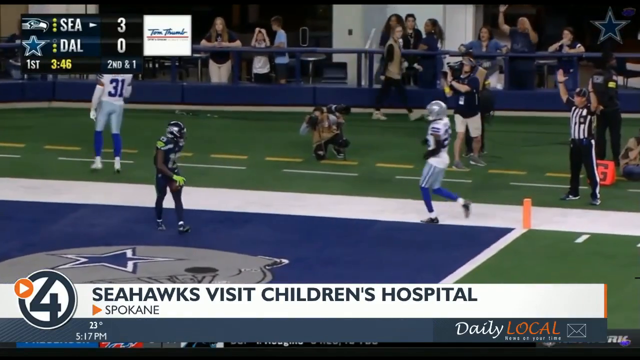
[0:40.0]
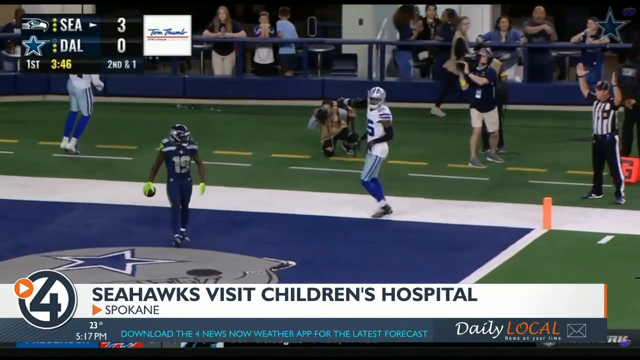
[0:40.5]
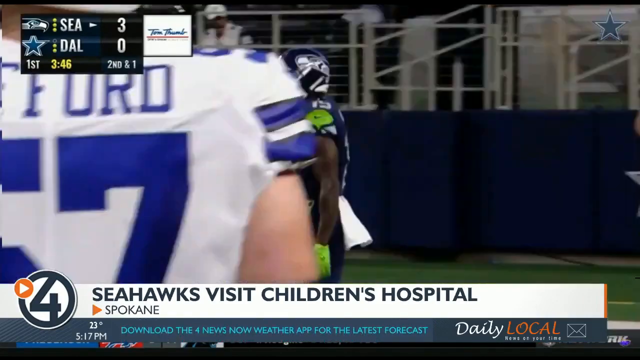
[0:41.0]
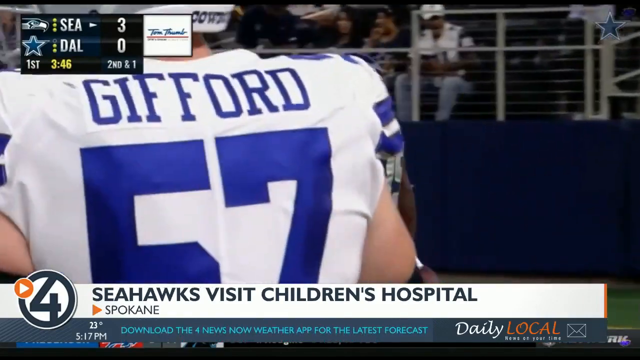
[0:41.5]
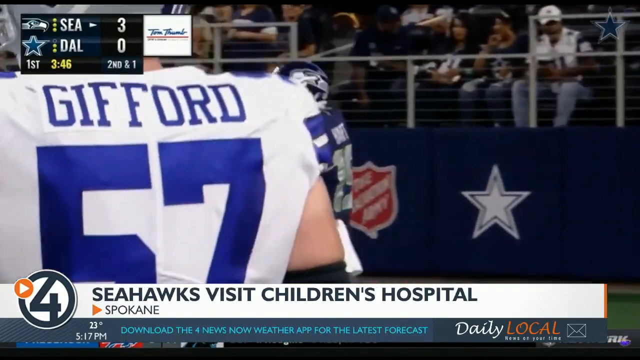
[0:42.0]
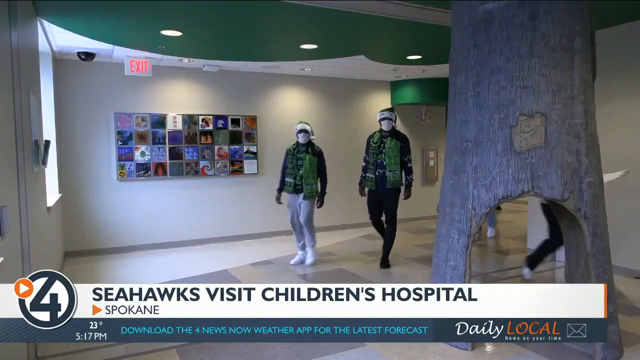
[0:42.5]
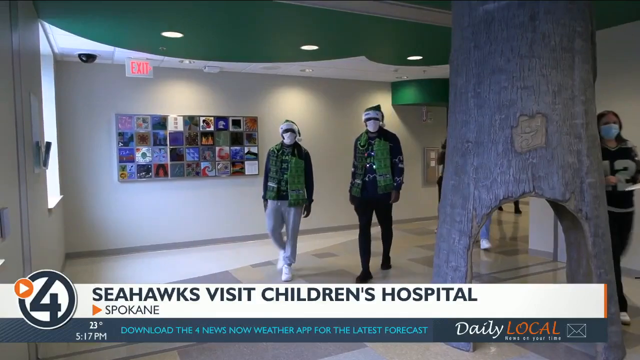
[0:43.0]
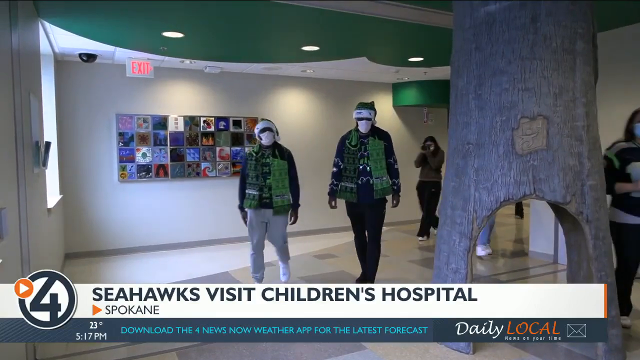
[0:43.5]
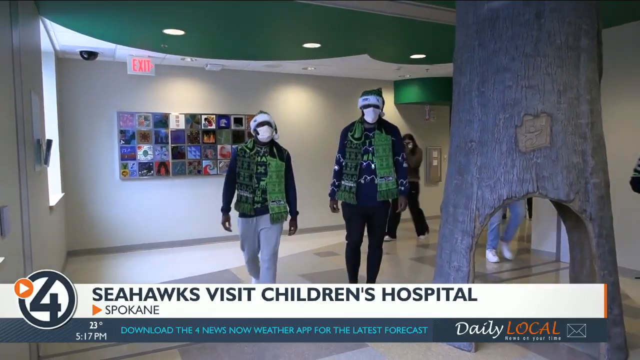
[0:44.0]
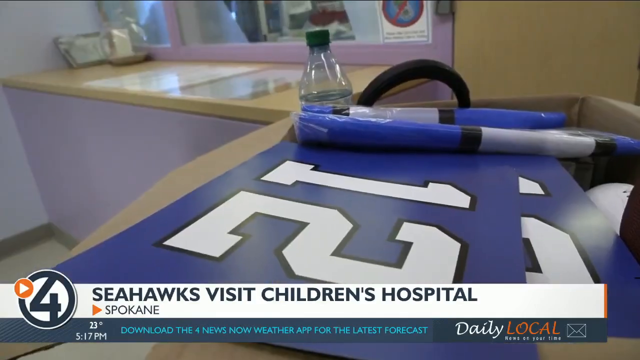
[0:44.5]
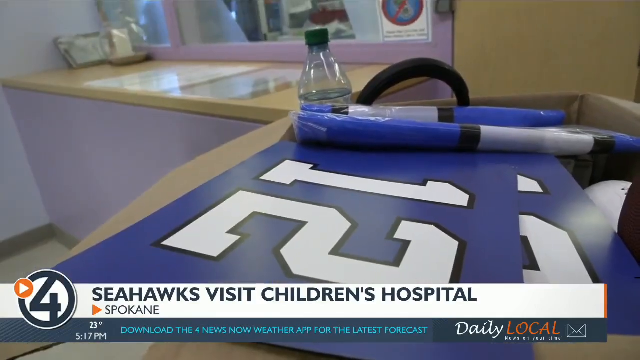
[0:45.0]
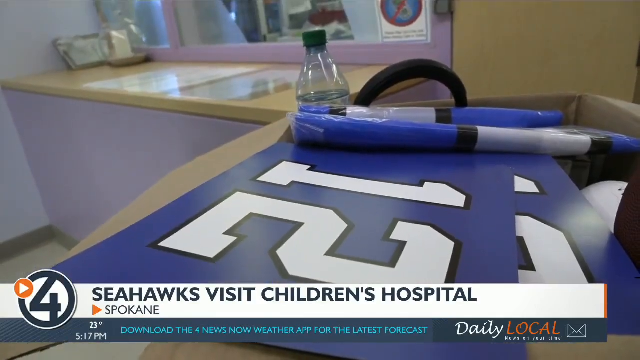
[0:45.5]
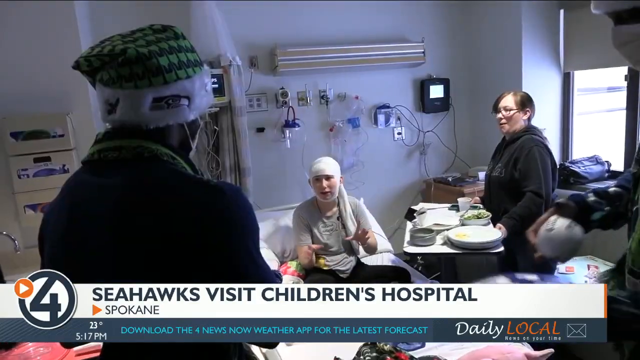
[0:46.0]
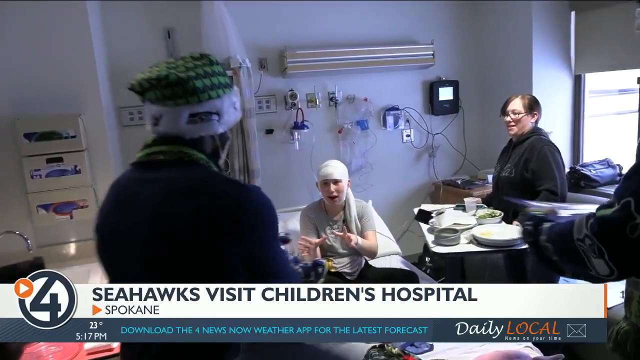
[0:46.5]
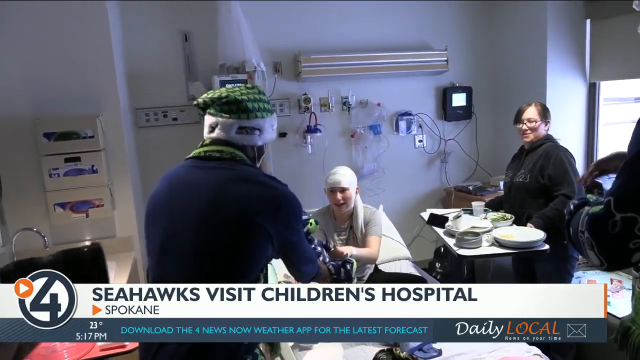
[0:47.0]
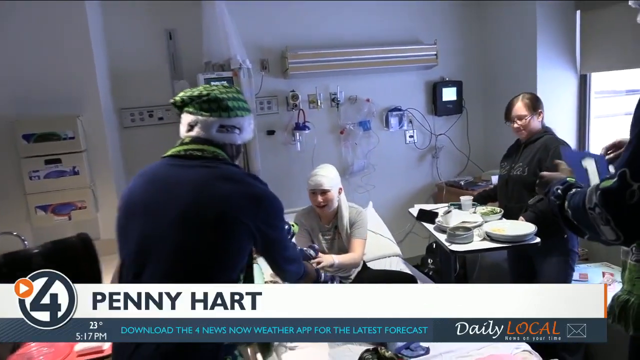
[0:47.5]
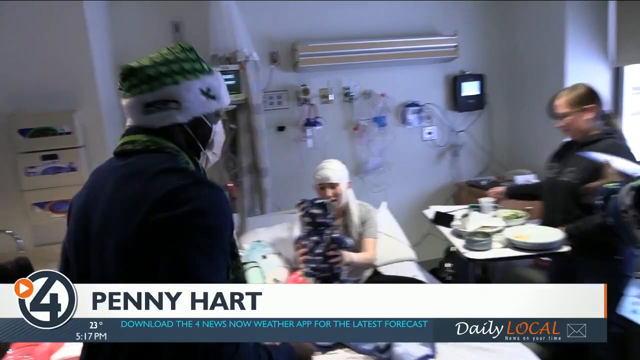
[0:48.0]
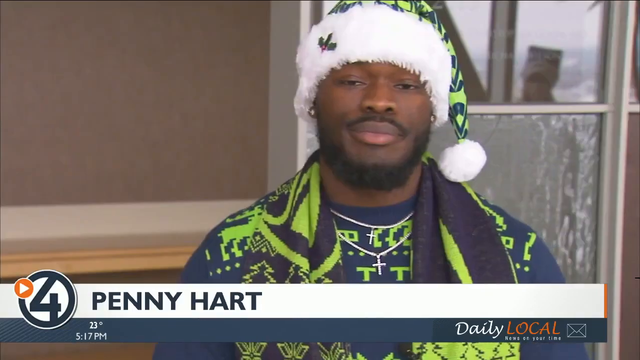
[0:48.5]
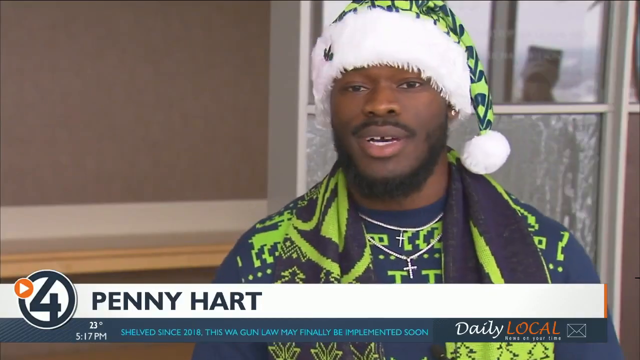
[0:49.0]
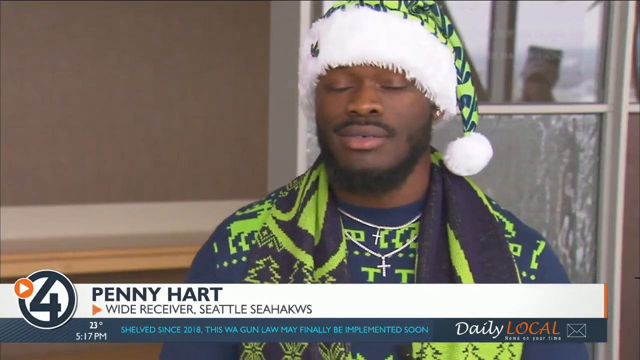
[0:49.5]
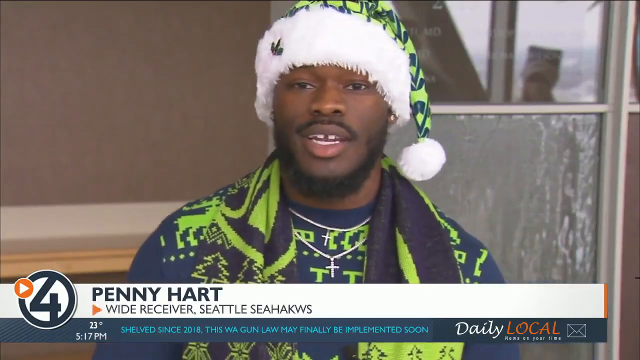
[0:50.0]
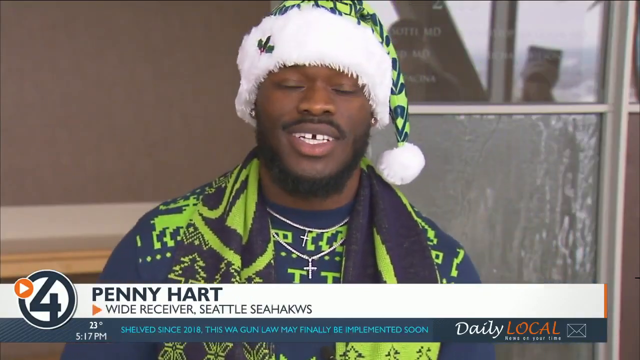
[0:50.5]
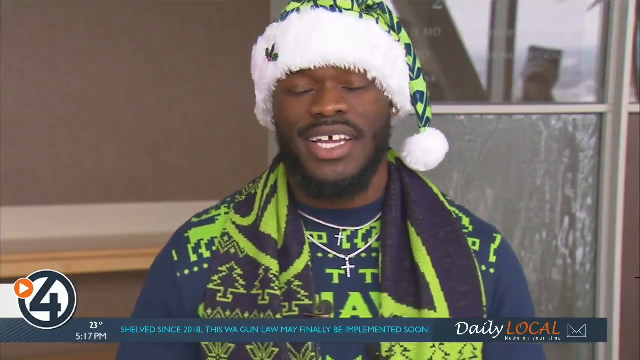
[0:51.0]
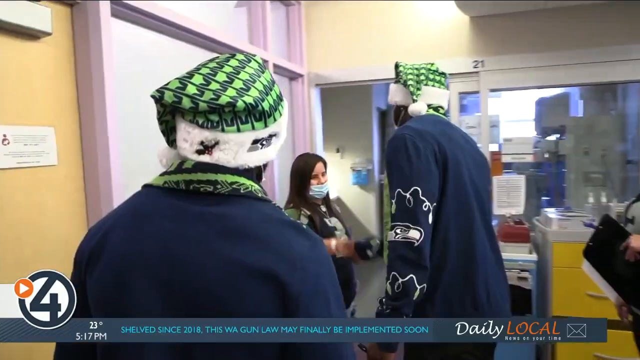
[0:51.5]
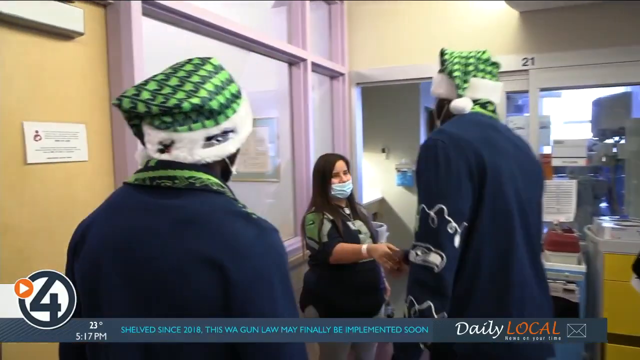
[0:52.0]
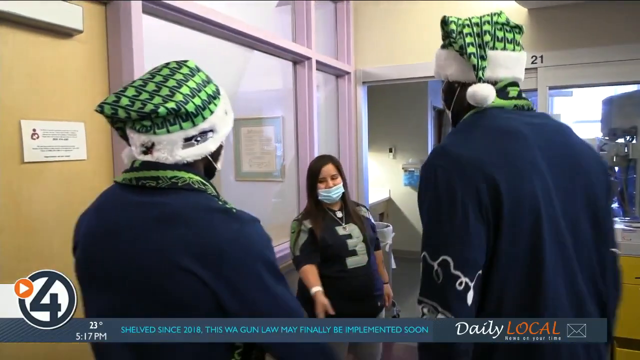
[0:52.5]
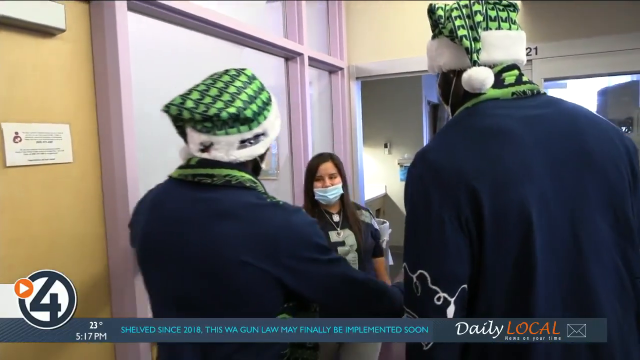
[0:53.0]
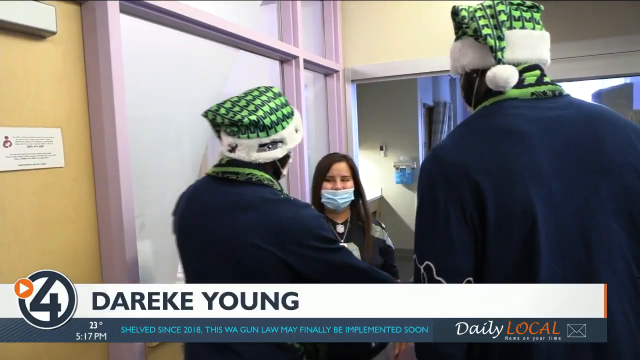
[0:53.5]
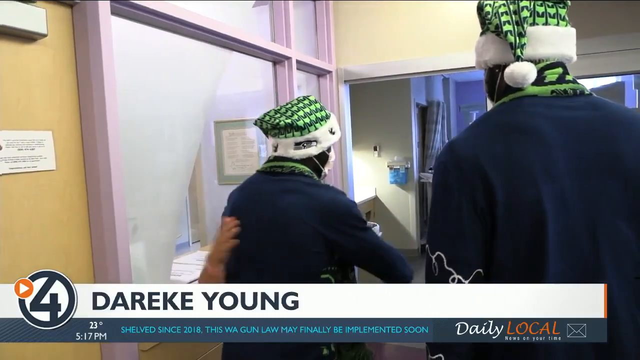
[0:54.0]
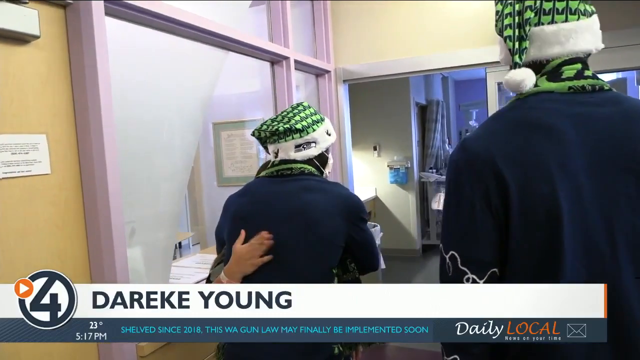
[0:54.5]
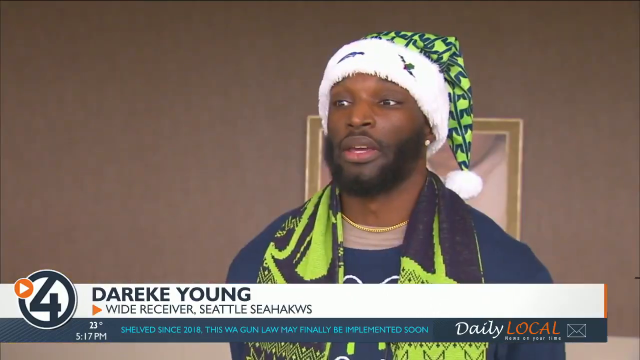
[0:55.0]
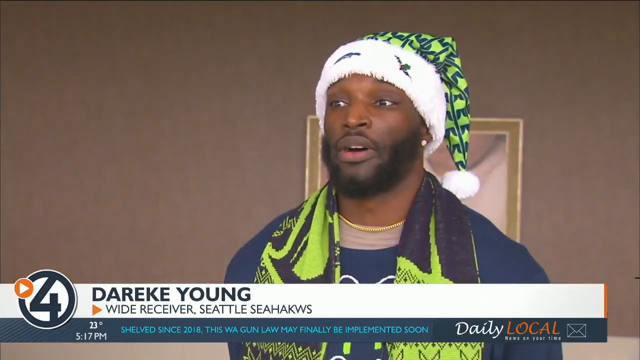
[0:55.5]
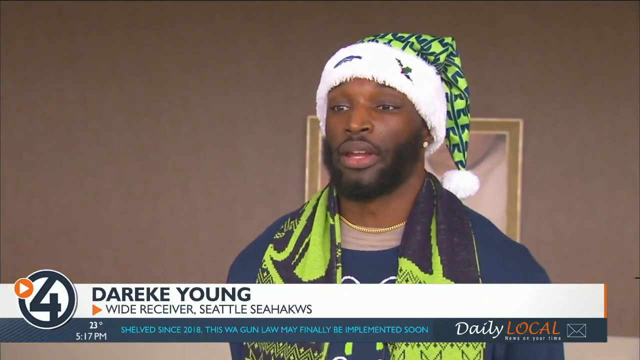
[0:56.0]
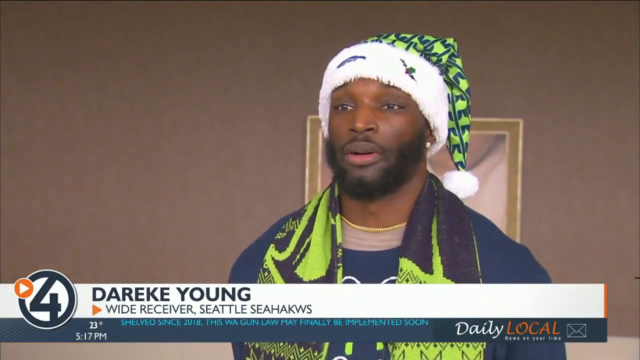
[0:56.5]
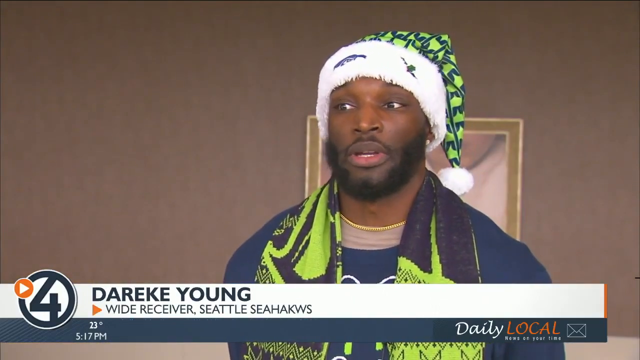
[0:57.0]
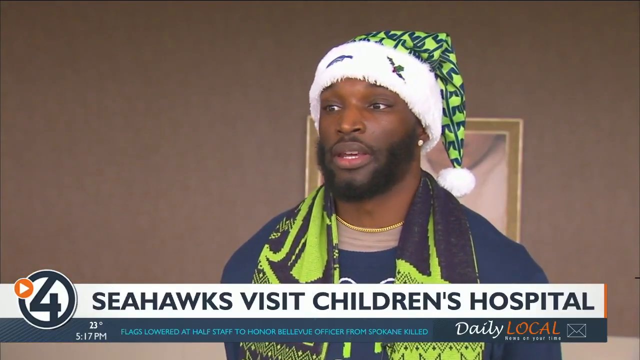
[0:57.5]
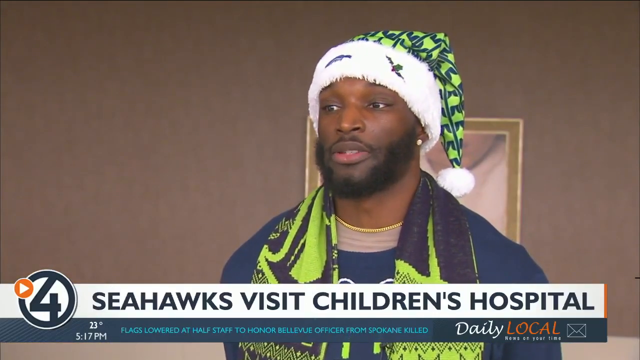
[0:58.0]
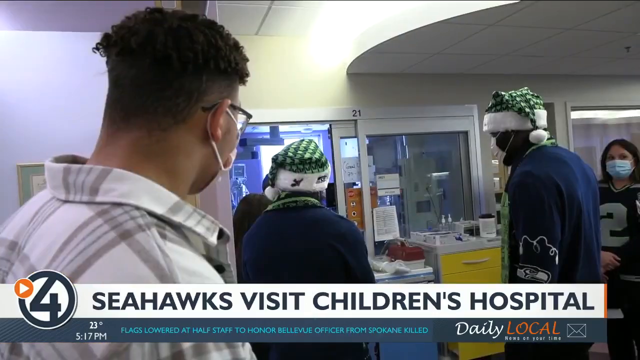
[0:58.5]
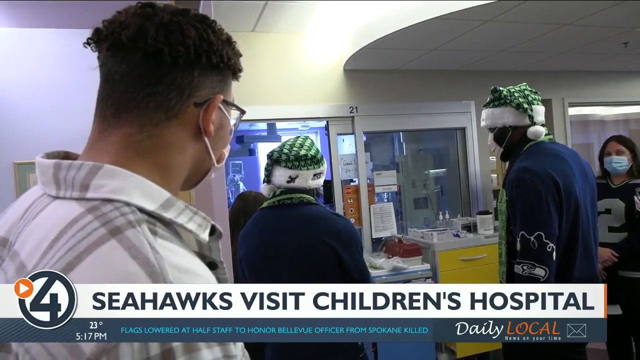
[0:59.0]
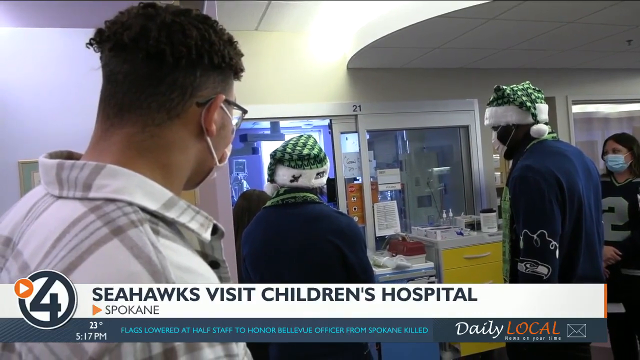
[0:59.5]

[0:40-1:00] Several people dressed in the various colors of the Seattle Seahawks walk toward the camera as if exiting the hospital building. They all wear safety masks during their visit. The number 12 is shown on a table inside a hospital room, and someone presumed to be a player gives a gift to a young fan in a hospital bed. A player named Penny Hart, dressed in Seattle Seahawks colors, is interviewed. Another player, Dareke Young, identified as a wide receiver for the Seattle Seahawks, is shown being interviewed. A couple of players are shown from behind comforting and visiting patients inside the hospital. The players are also shown greeting family members around the children's hospital.